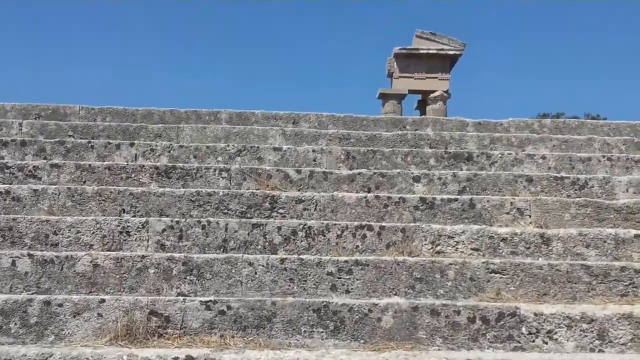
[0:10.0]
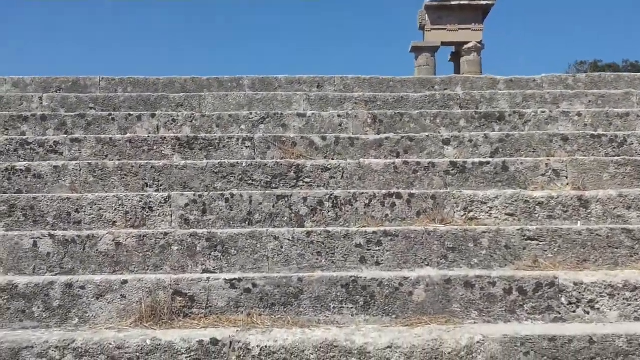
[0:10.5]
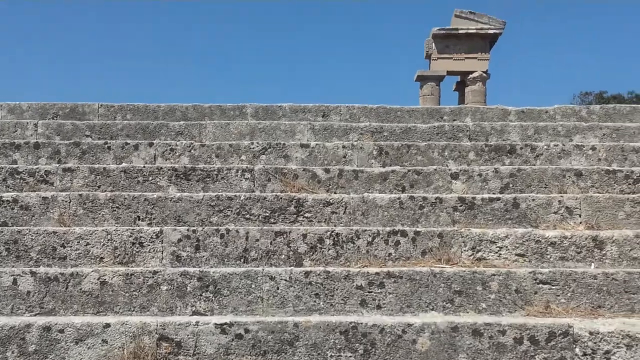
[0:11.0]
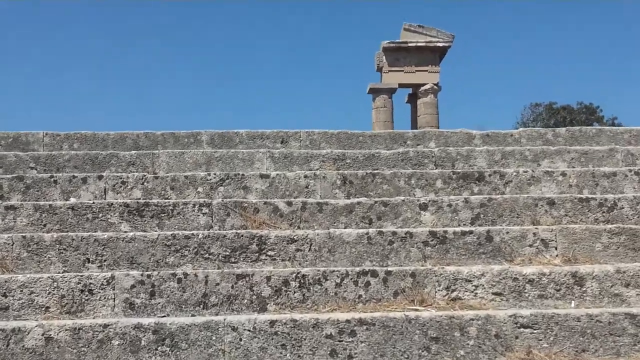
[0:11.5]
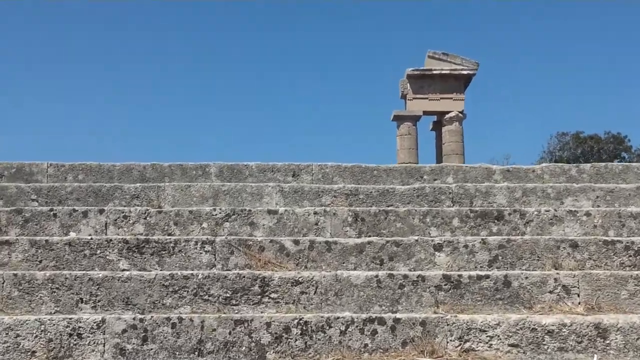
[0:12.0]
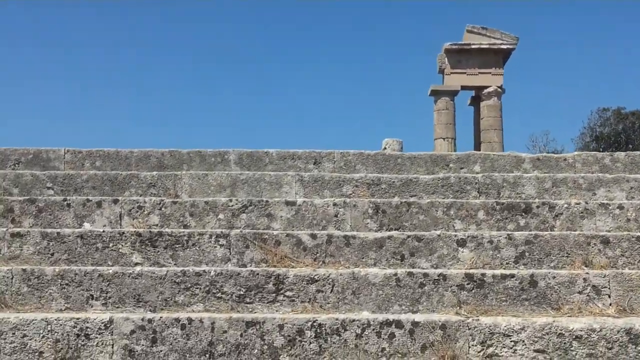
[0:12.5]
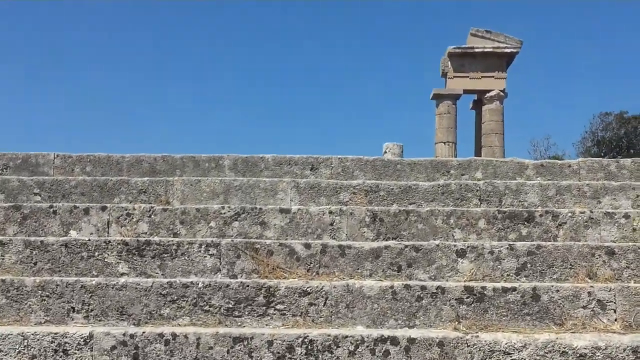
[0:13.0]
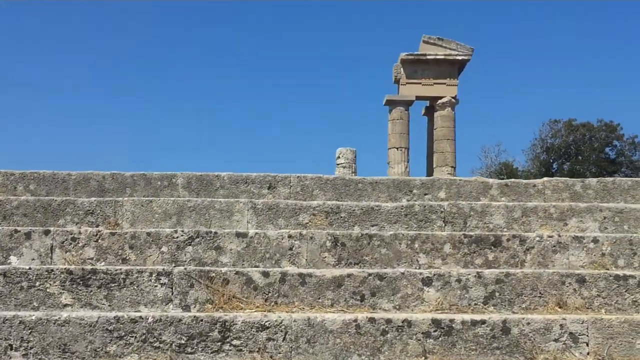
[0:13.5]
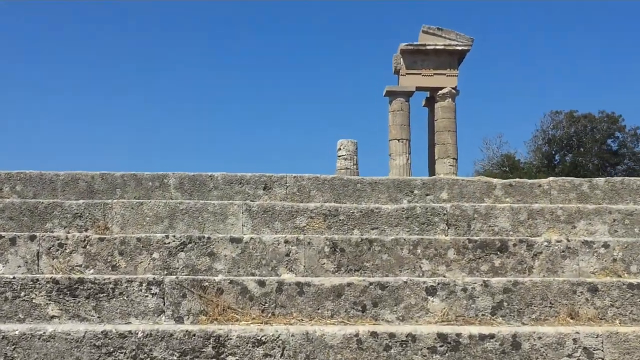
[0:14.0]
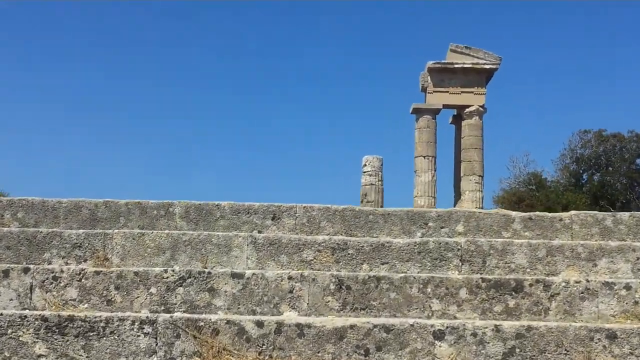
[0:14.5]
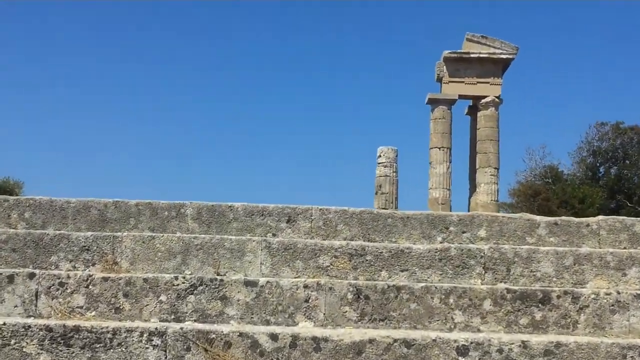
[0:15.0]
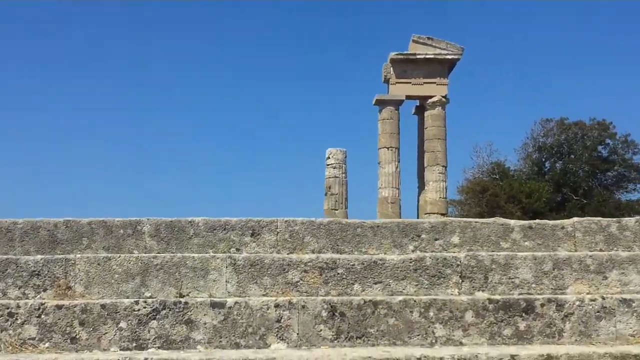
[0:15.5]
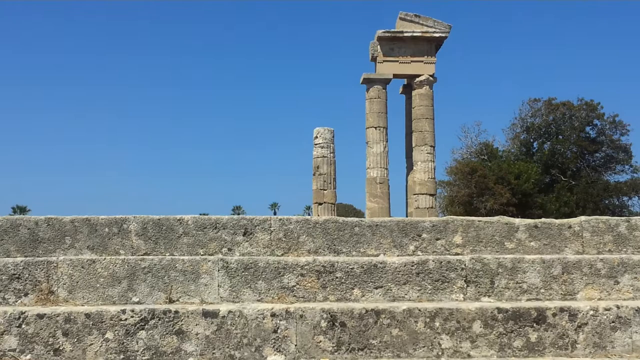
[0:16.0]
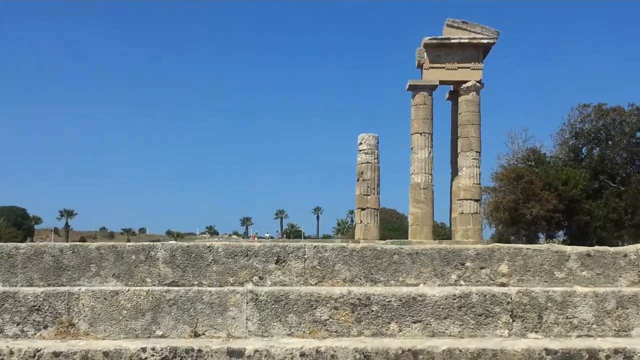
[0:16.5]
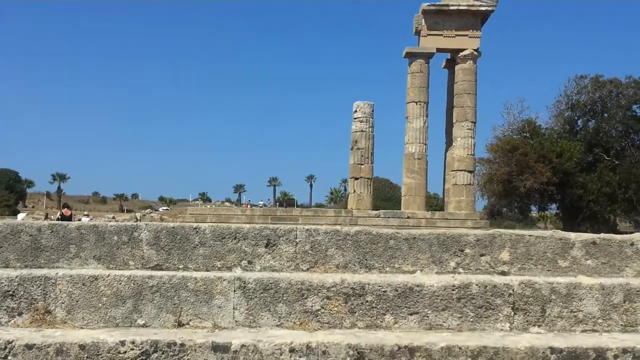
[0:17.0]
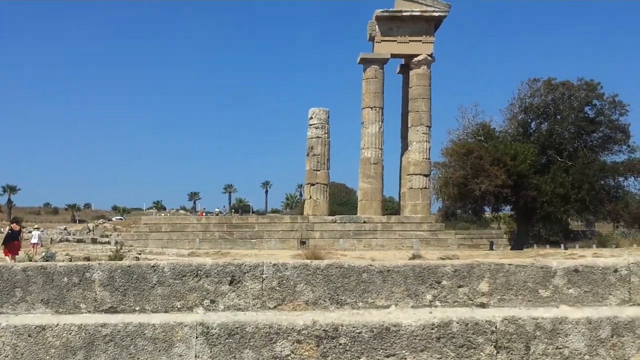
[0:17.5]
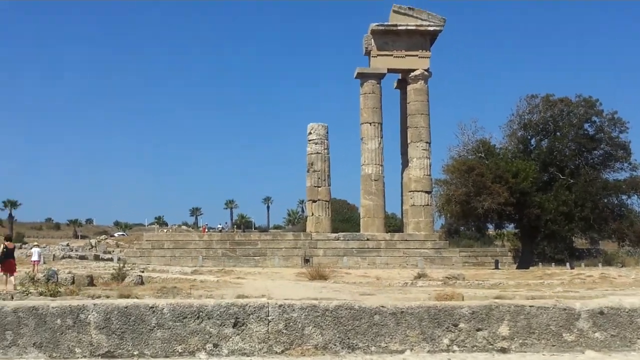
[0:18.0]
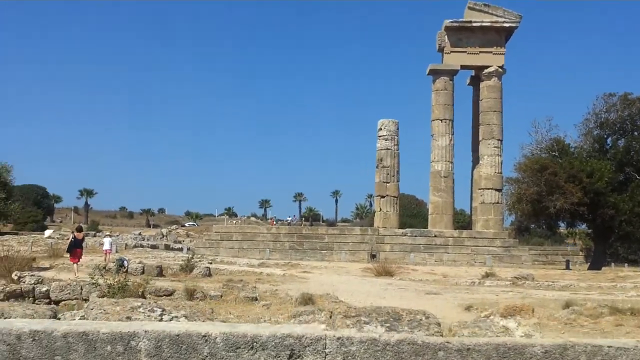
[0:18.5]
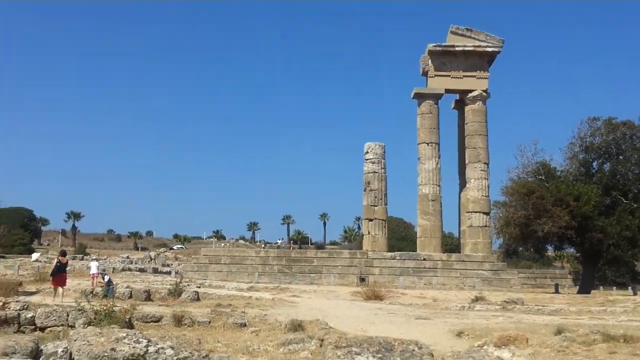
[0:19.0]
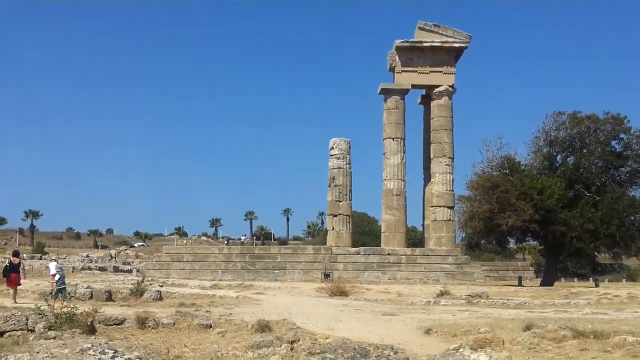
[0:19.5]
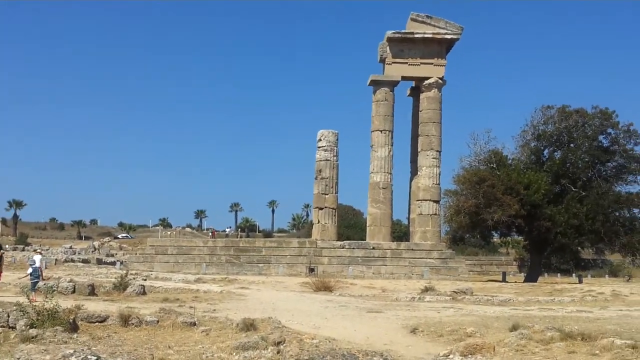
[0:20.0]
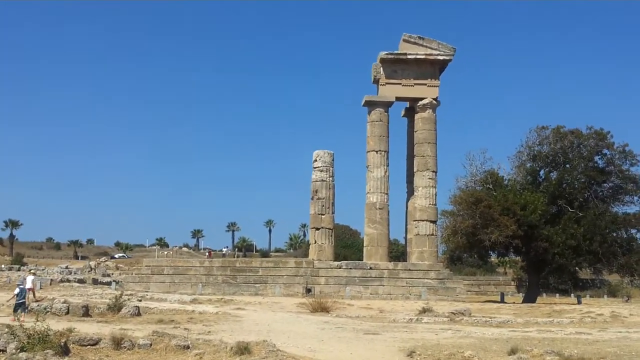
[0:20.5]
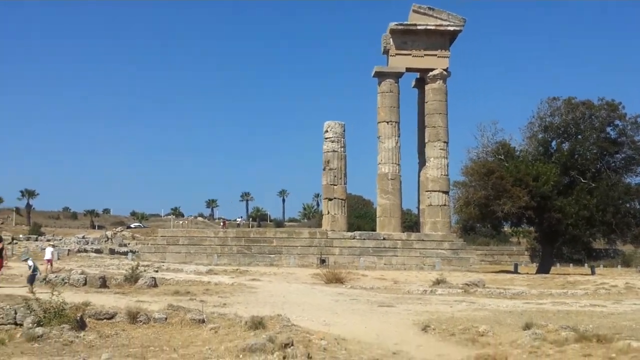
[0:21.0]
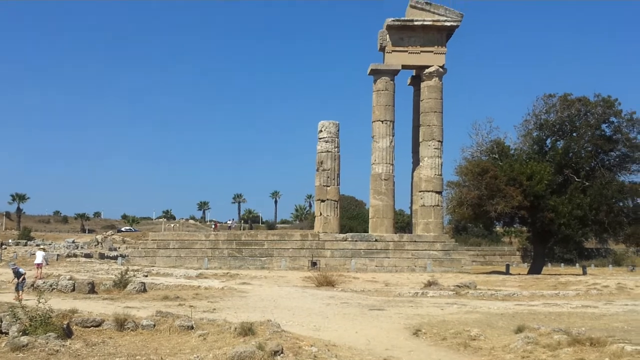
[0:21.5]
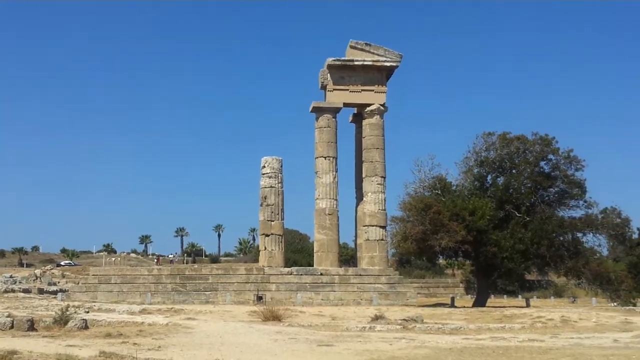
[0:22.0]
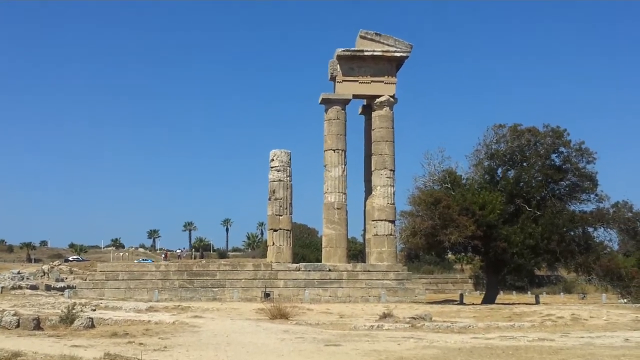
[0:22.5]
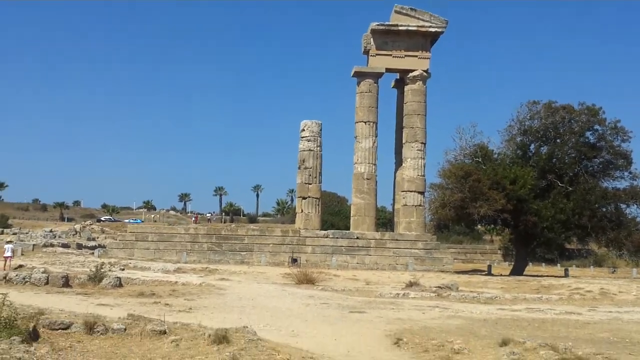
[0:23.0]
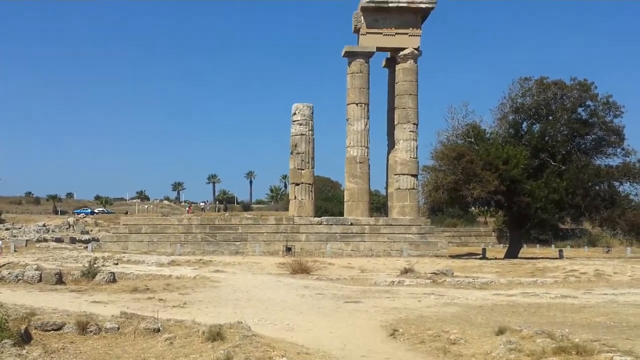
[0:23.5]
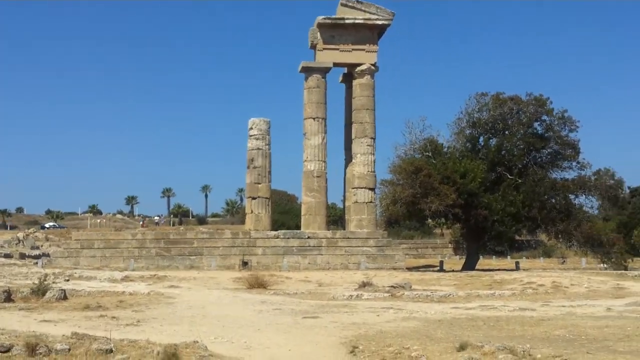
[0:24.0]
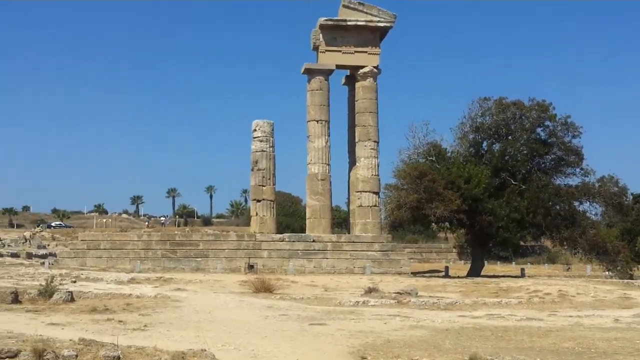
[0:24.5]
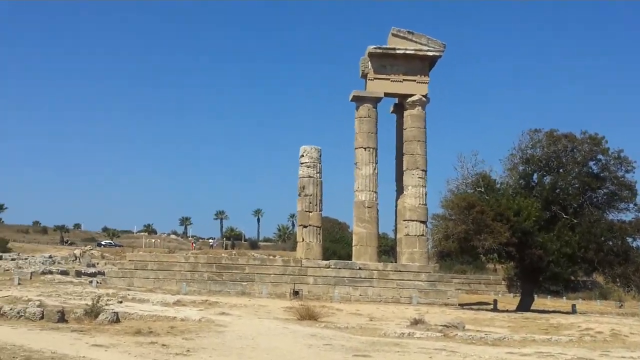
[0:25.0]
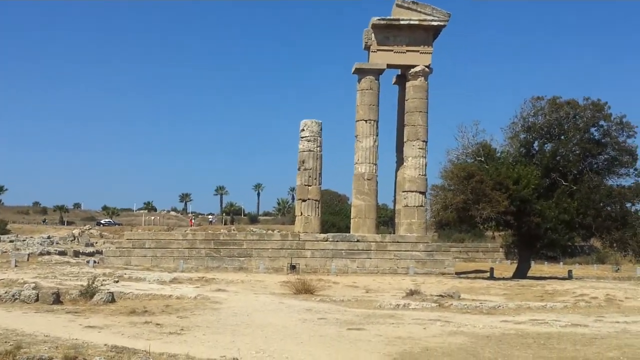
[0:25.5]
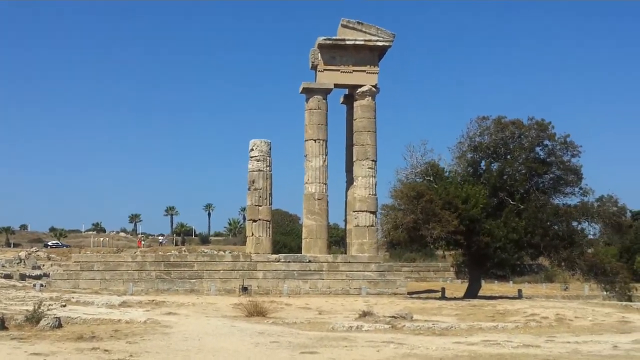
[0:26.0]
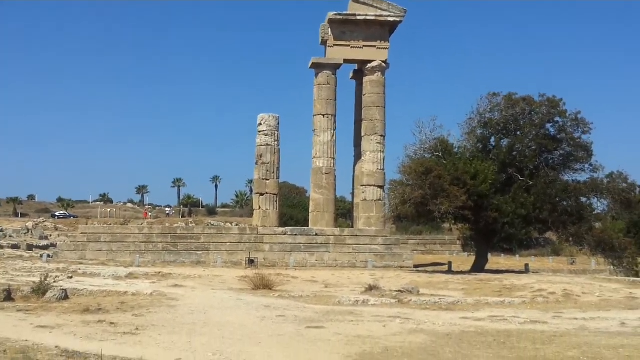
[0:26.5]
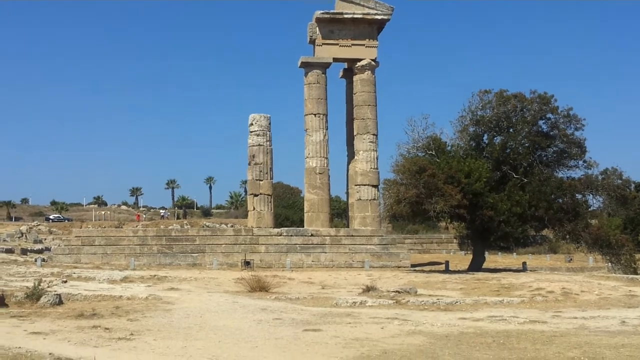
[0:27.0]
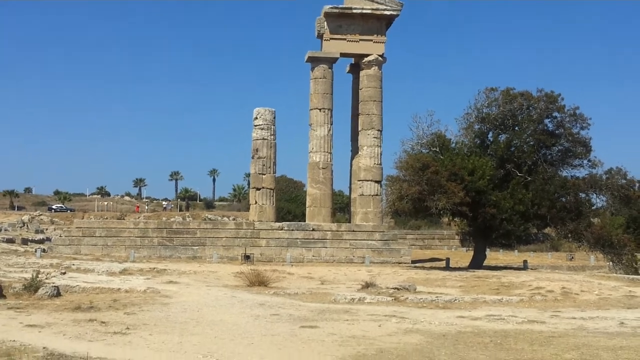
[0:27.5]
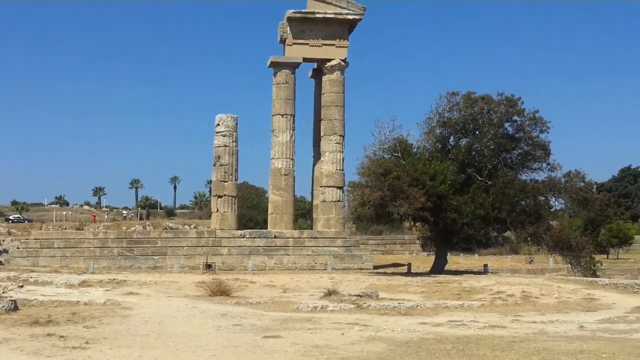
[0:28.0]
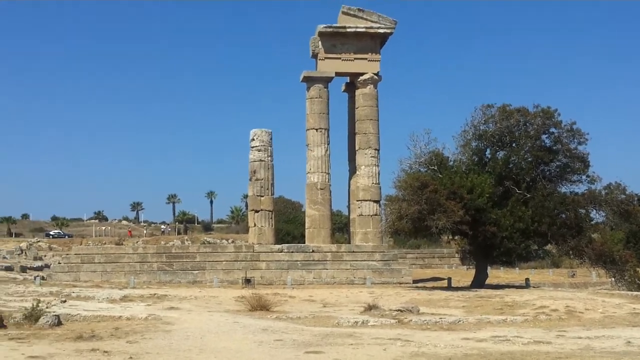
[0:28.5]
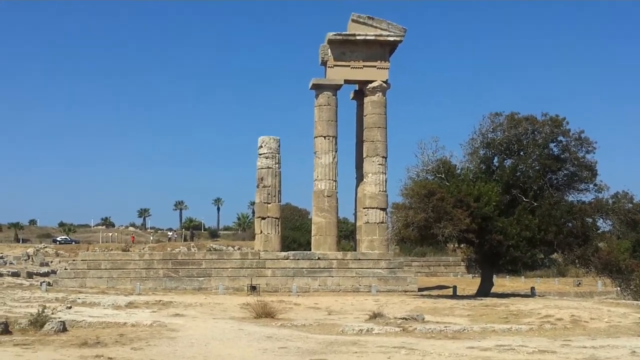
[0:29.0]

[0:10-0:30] The person recording reaches the top of the stairs, revealing more of what is at the top of the pyramid-like structure. In the distance, a few more stairs lead up to another ruinous column with a large stone brick on top of it. There appear to be four different columns; one of them is much shorter and is not supporting the structure. Everything is made of stone. It is clearly a tourist destination, with many people walking around and cars in the background. The area seems to be desert-like, with ground of mostly dirt and sand. In the background are trees that look to be palm trees, and an olive tree is much closer in the foreground. It is still a very sunny day with no clouds in the sky, and it looks like a very warm place. The camera shakes a little, apparently from the effort of walking up all the stairs.